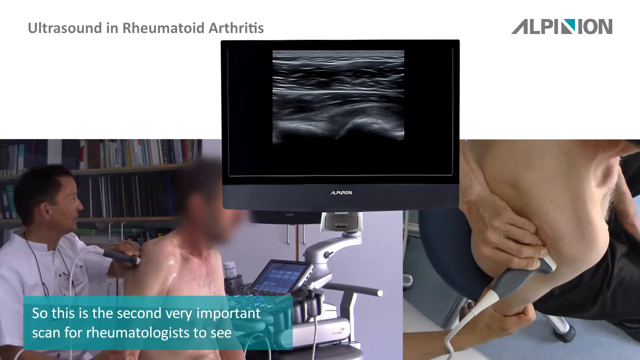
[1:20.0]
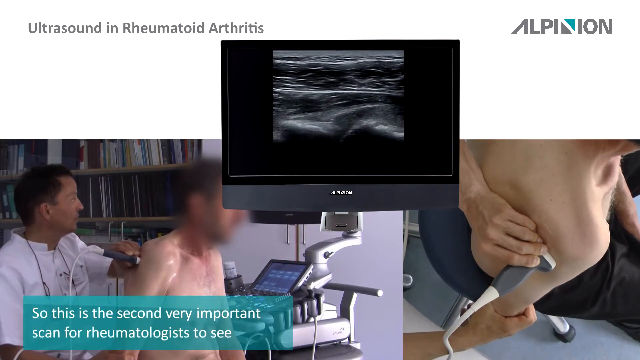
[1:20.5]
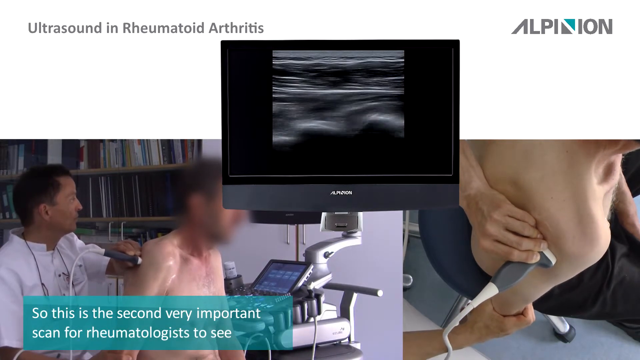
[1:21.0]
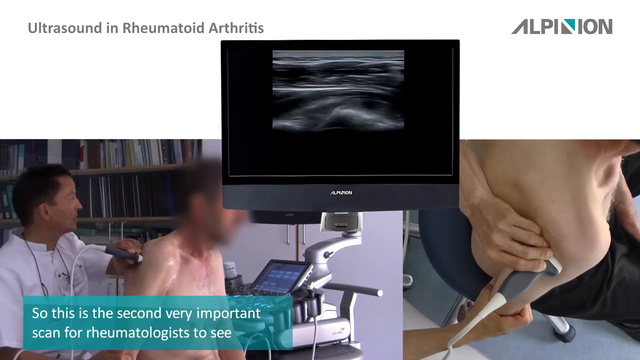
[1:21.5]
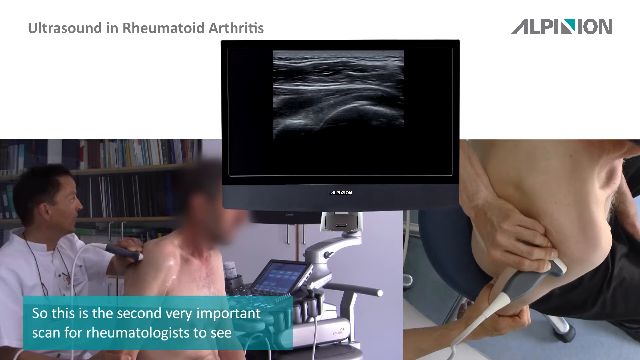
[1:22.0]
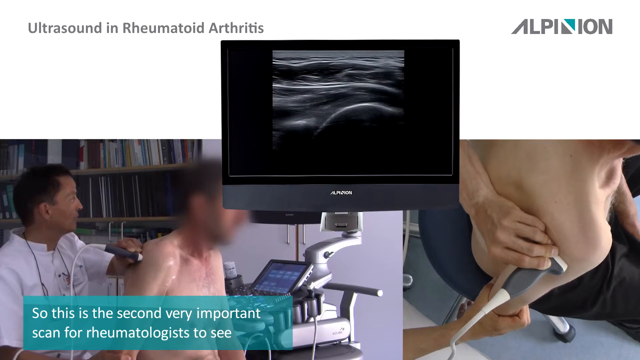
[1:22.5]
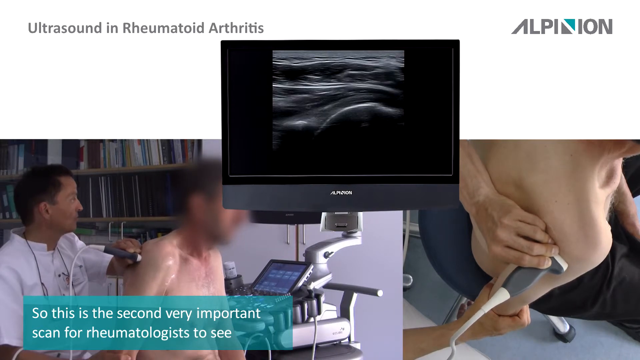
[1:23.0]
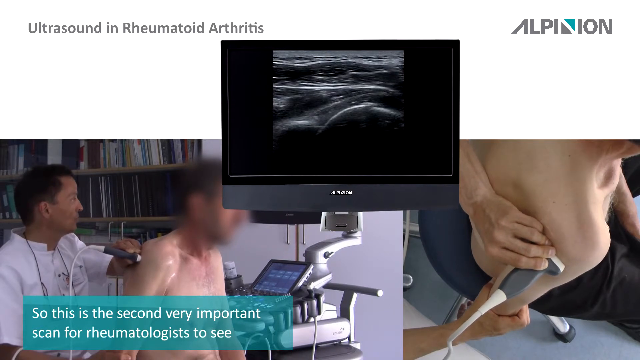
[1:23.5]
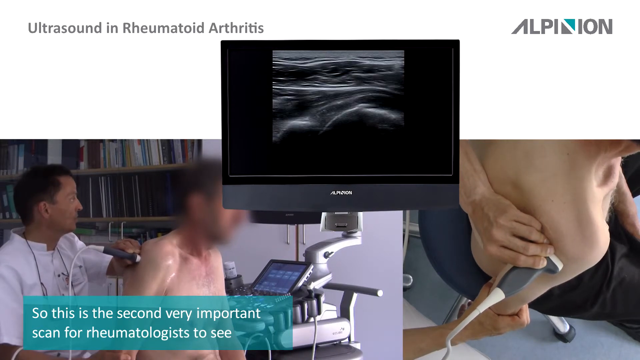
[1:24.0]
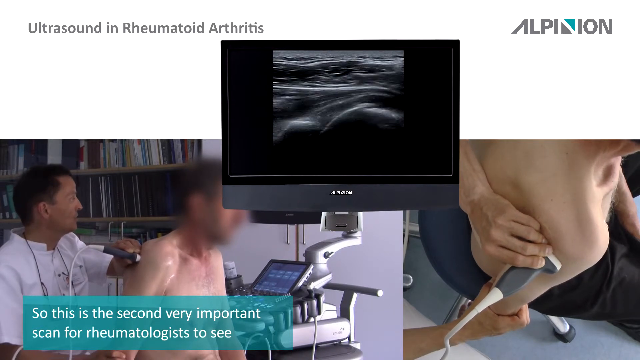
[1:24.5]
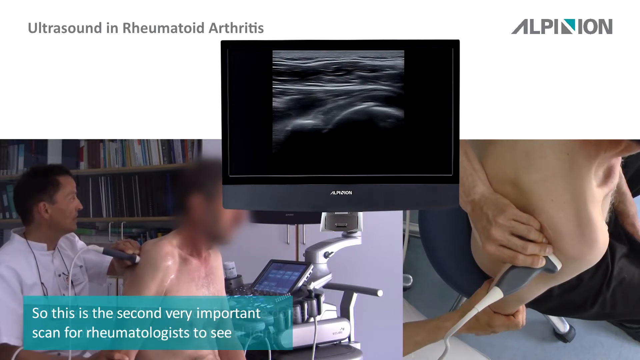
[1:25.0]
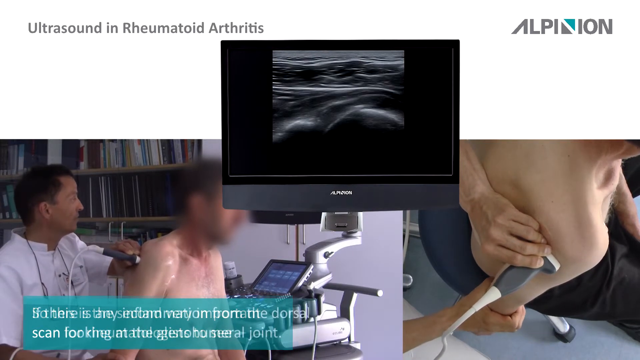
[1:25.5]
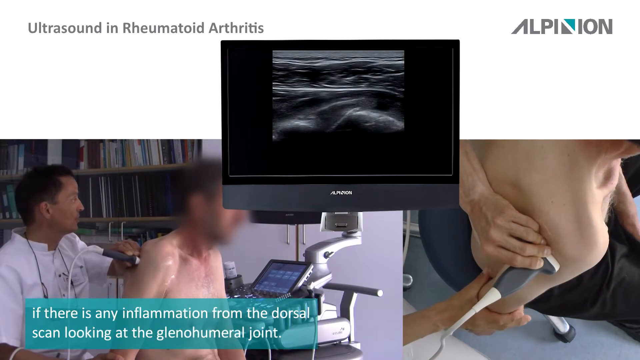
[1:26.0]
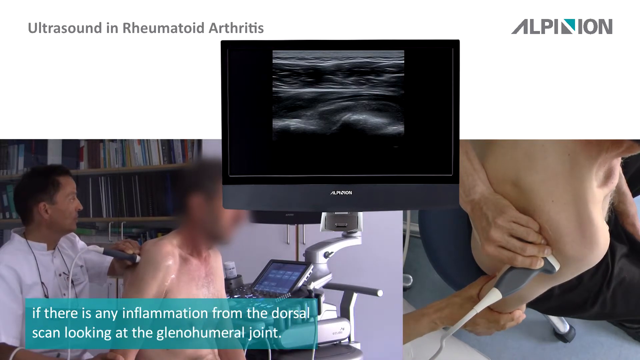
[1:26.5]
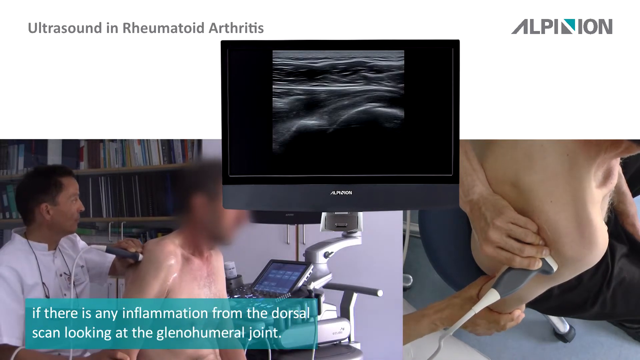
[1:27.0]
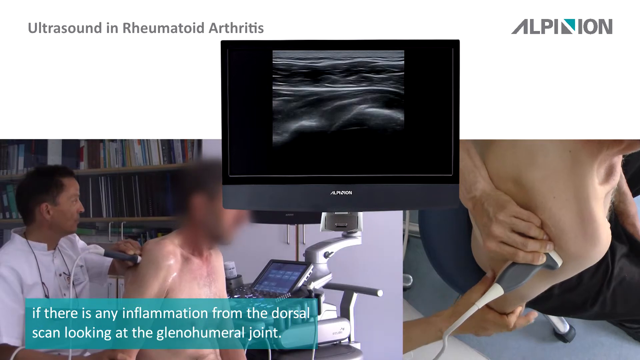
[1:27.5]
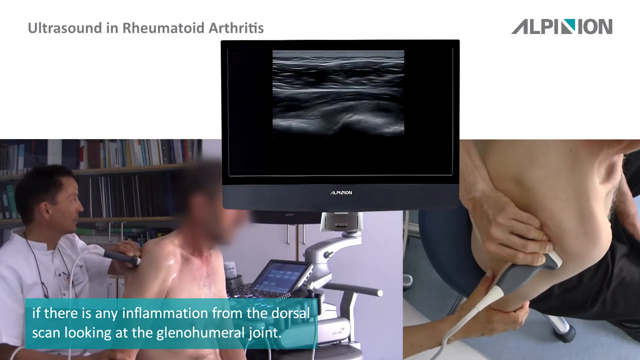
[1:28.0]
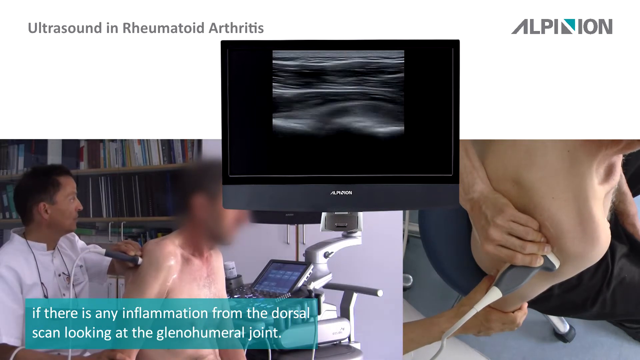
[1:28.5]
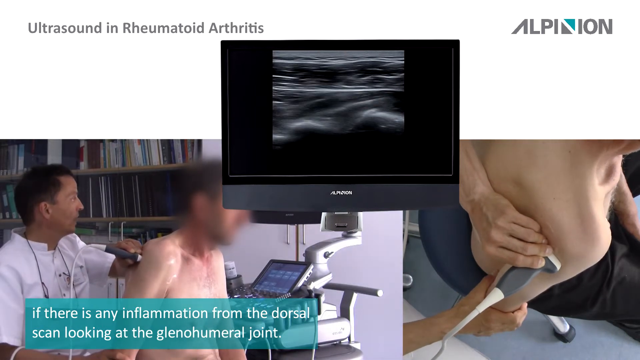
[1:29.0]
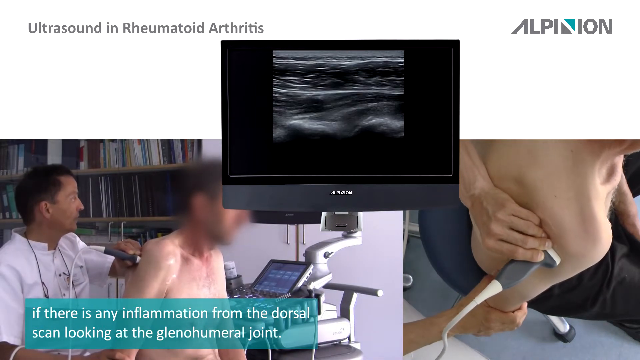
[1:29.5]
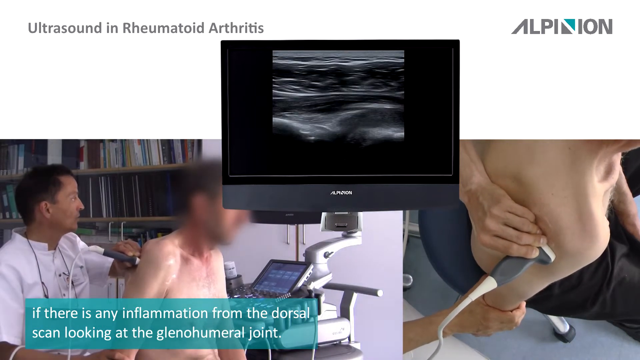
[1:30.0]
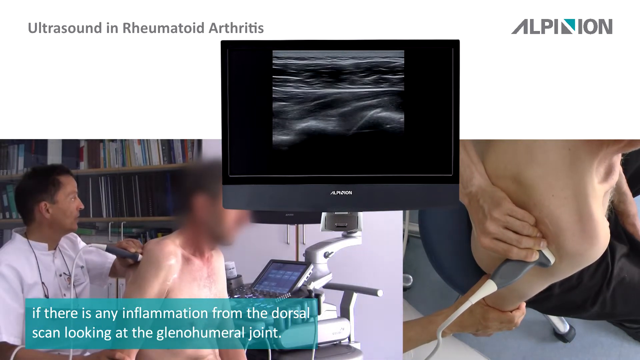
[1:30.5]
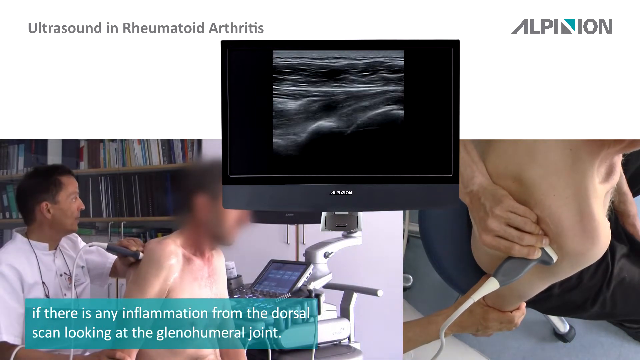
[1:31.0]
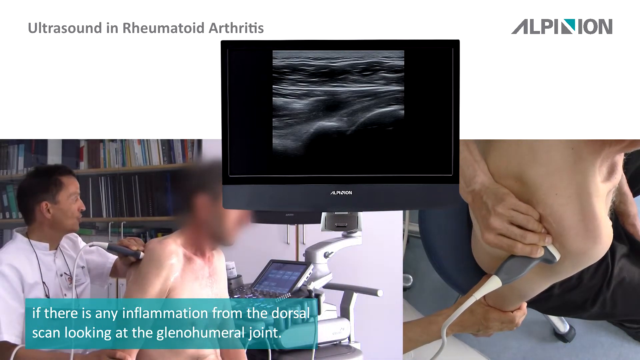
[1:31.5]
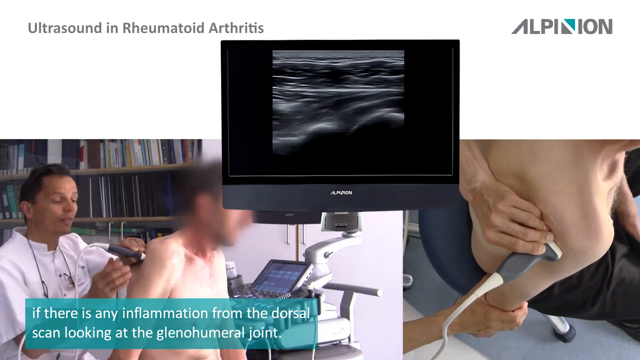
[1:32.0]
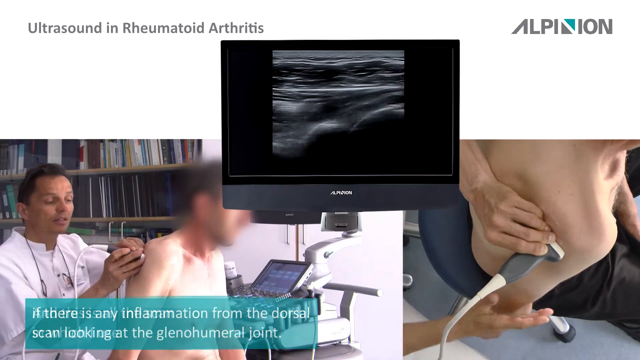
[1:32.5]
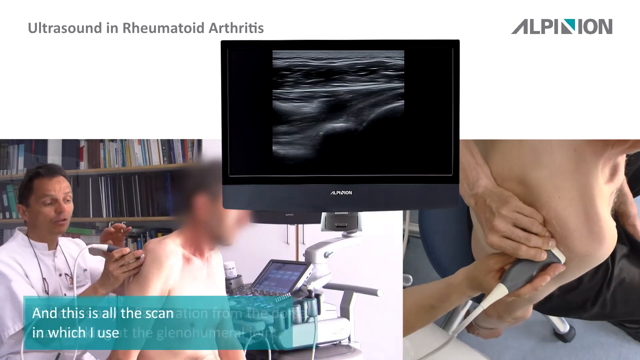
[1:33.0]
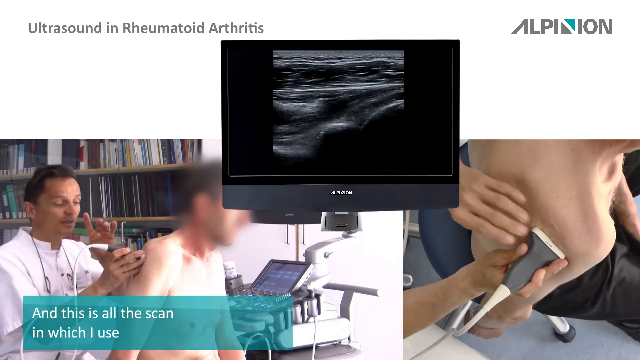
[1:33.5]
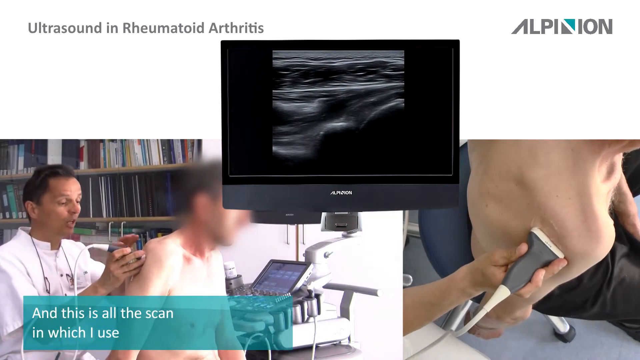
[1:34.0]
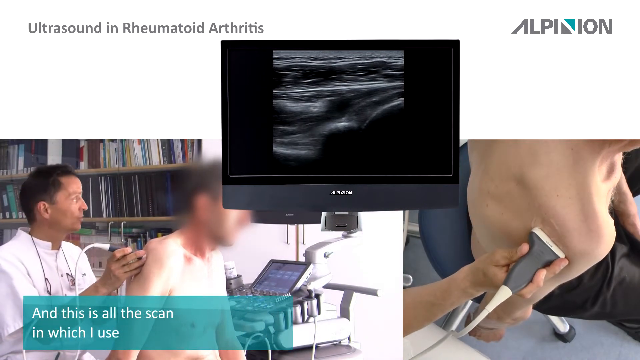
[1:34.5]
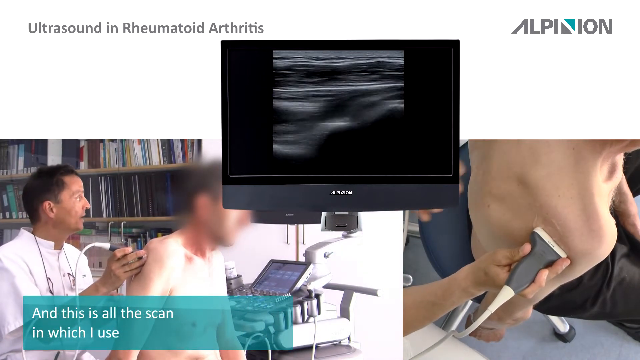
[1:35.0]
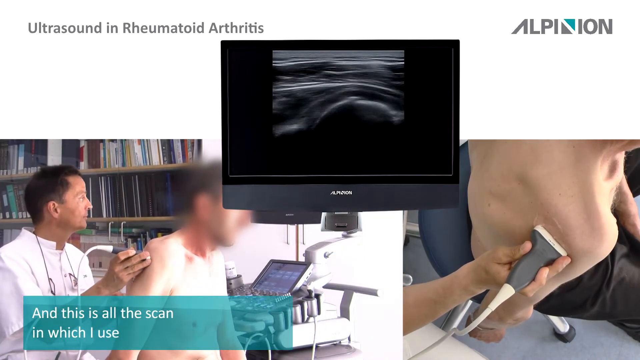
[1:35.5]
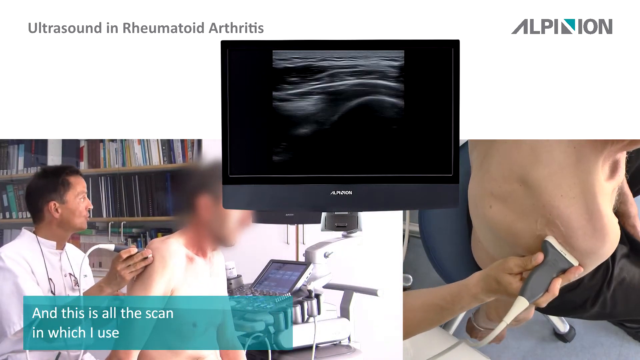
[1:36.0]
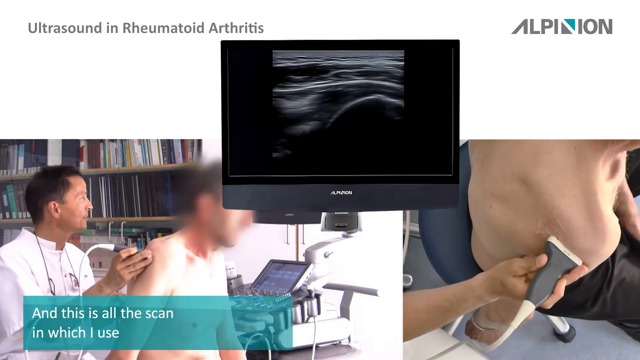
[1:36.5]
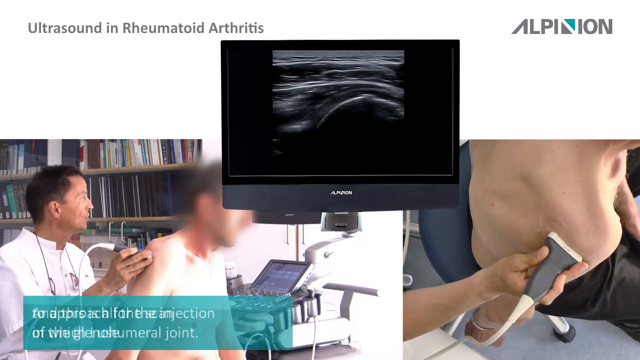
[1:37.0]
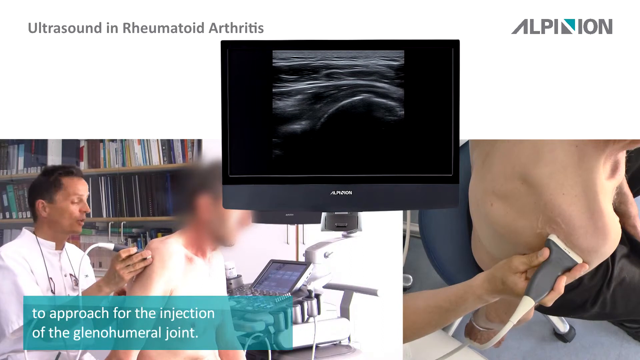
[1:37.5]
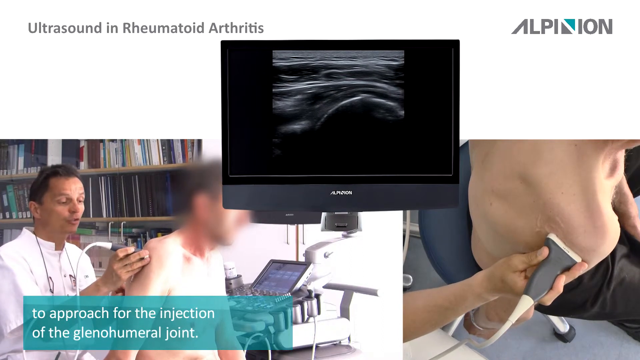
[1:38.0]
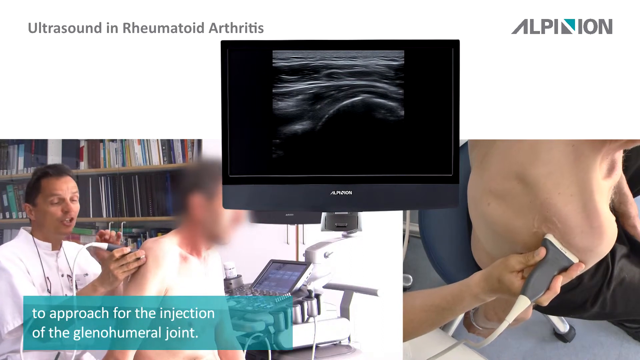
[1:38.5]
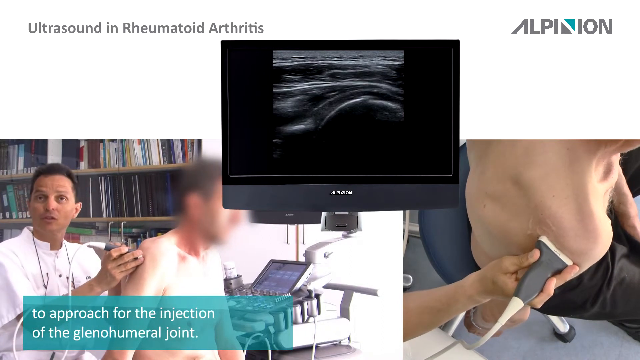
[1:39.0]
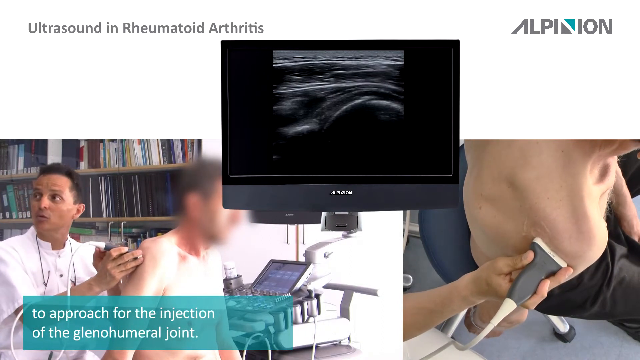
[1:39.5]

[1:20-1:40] On-screen text reads: "if there is any inflammation from the dorsal scan looking at the glenohumeral joint" and "and this is all the scanning which I use to approach for the injection of the glenohumeral joint." The text seems fragmented, not forming full sentences. The live demonstration continues: the doctor still has his right hand on his right arm and his left hand on the ultrasound material, which he now appears to be moving as well. There also appears to be some kind of gel on the man's right shoulder, where the ultrasound is being performed.